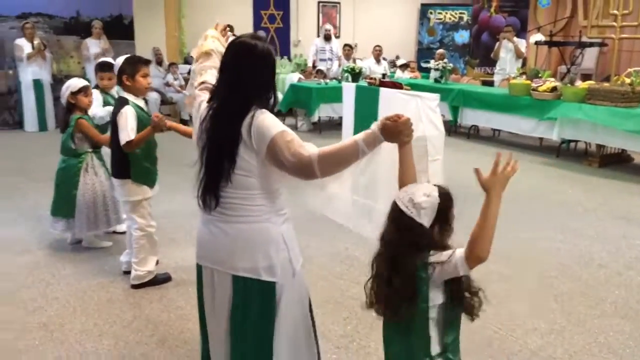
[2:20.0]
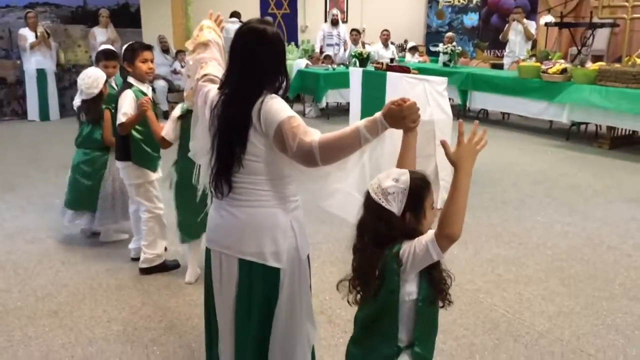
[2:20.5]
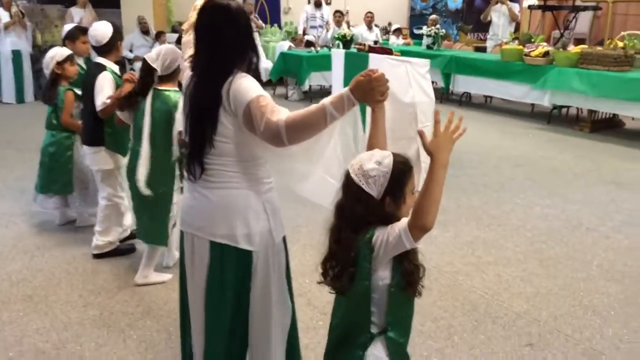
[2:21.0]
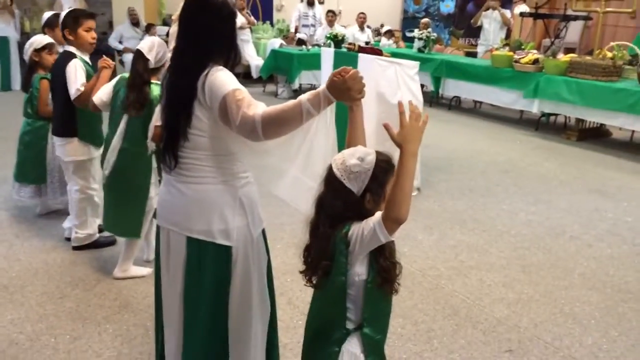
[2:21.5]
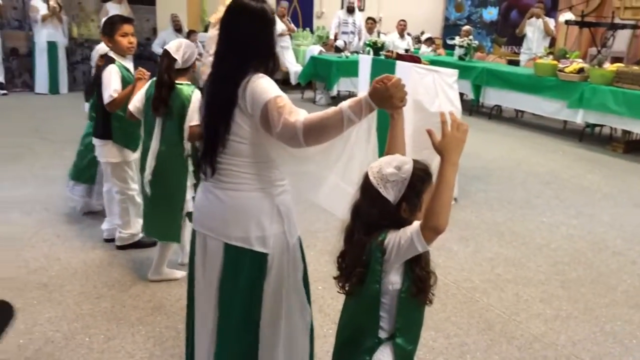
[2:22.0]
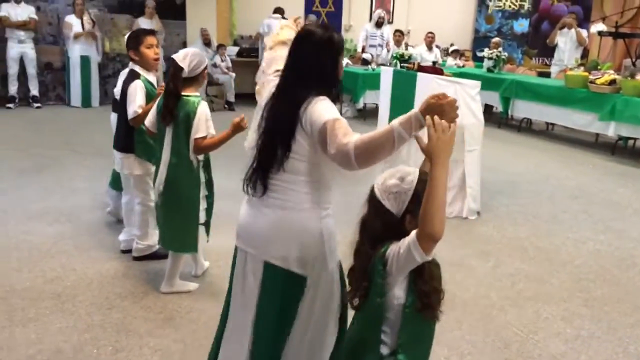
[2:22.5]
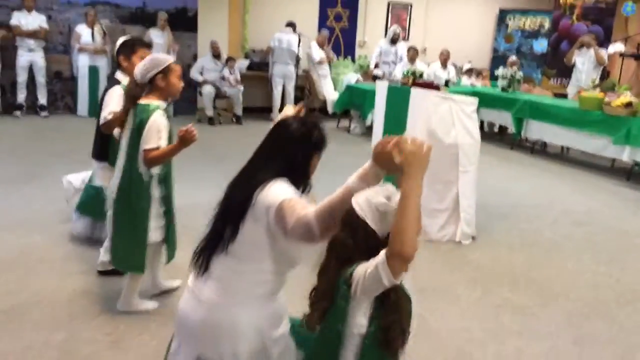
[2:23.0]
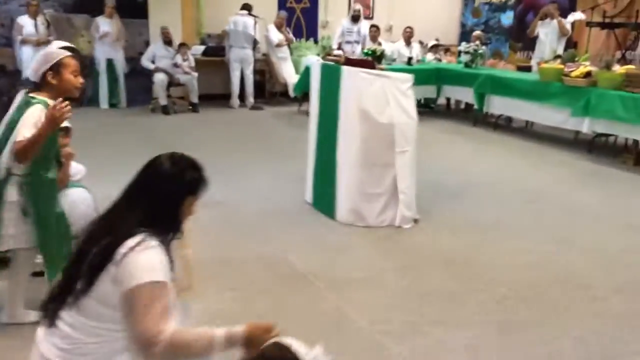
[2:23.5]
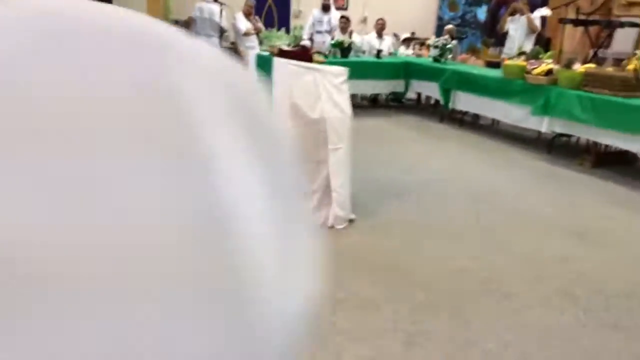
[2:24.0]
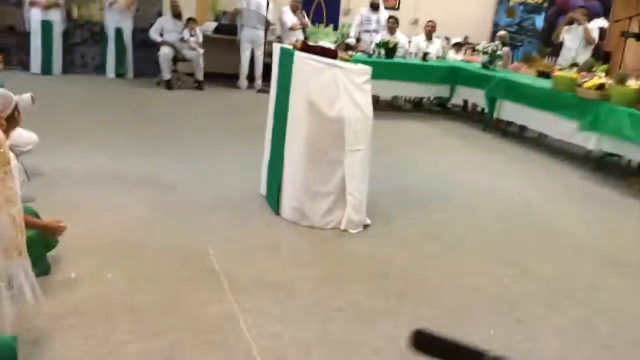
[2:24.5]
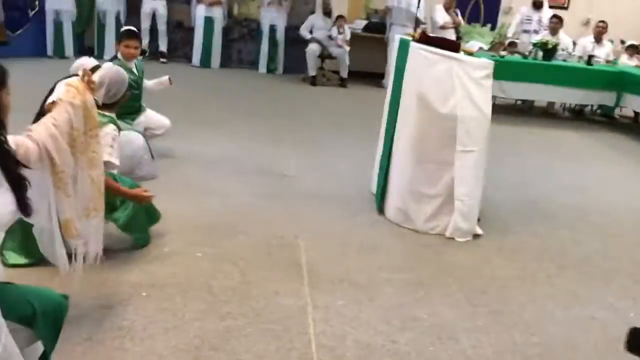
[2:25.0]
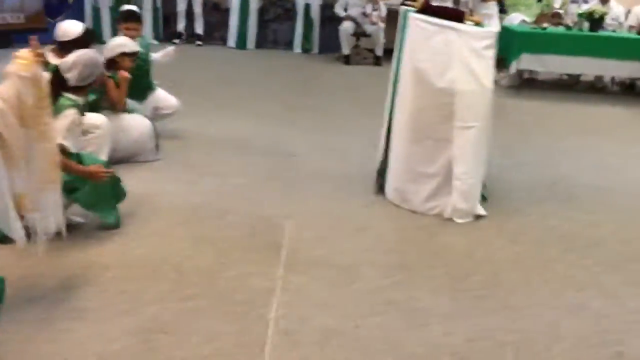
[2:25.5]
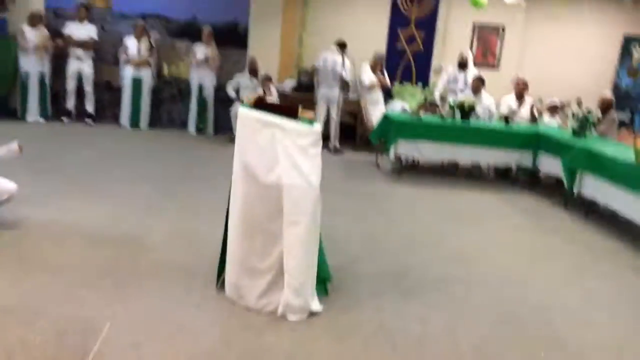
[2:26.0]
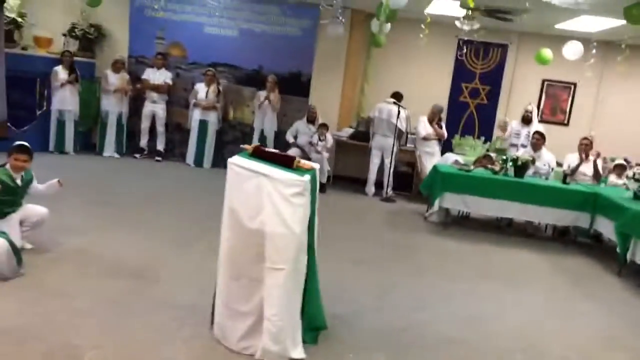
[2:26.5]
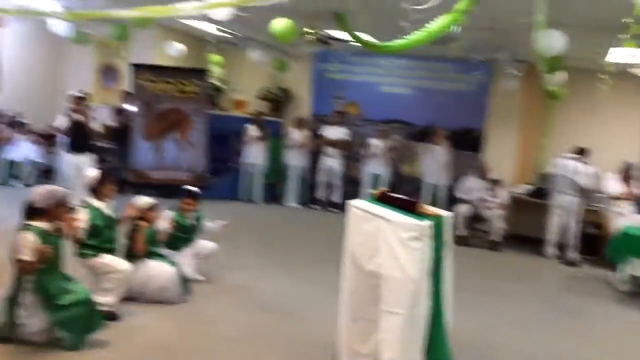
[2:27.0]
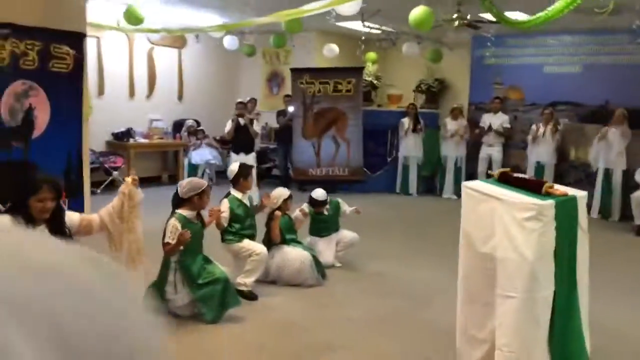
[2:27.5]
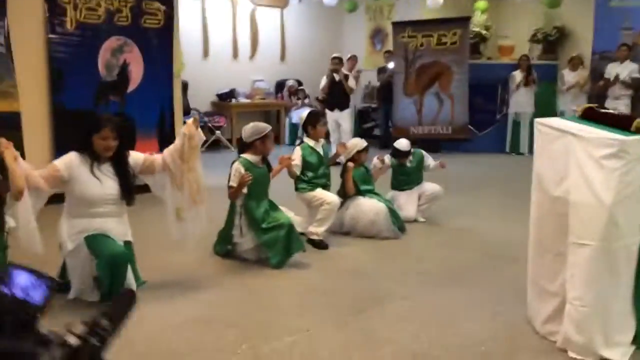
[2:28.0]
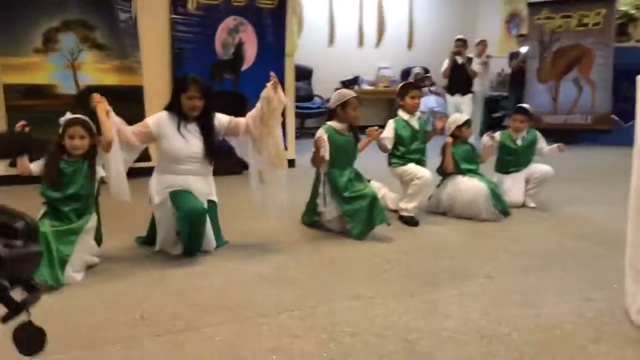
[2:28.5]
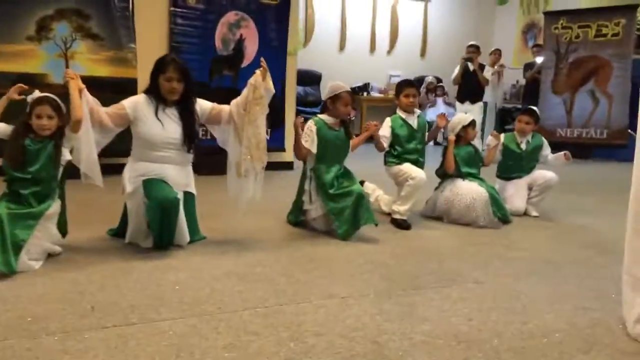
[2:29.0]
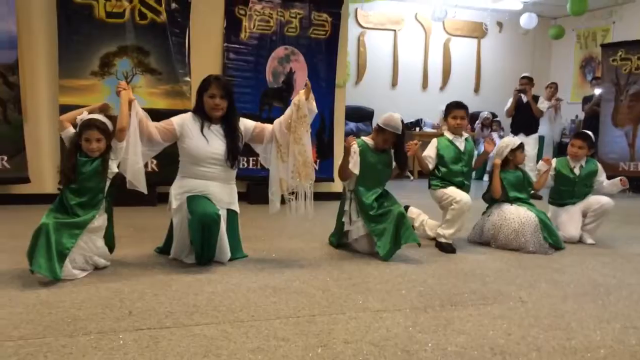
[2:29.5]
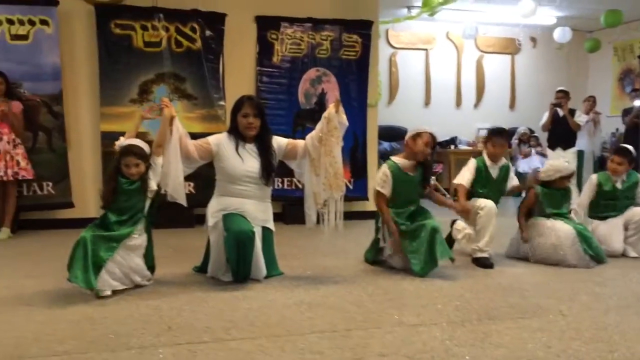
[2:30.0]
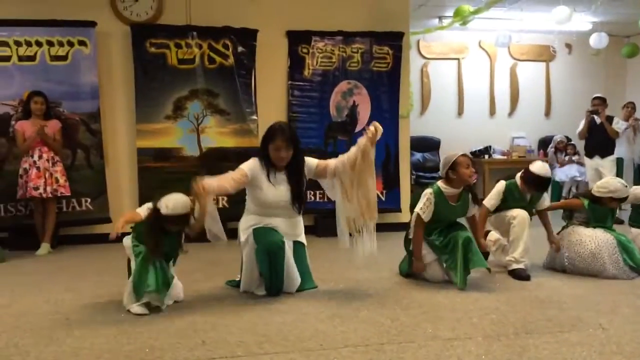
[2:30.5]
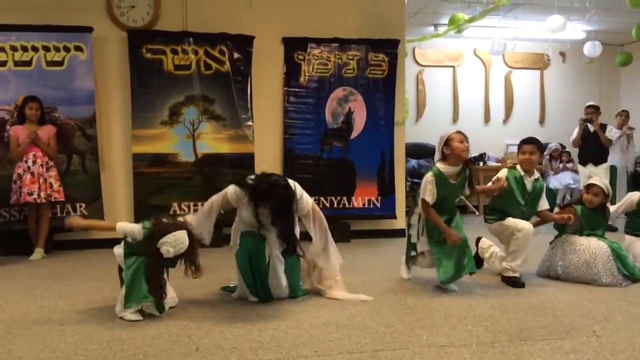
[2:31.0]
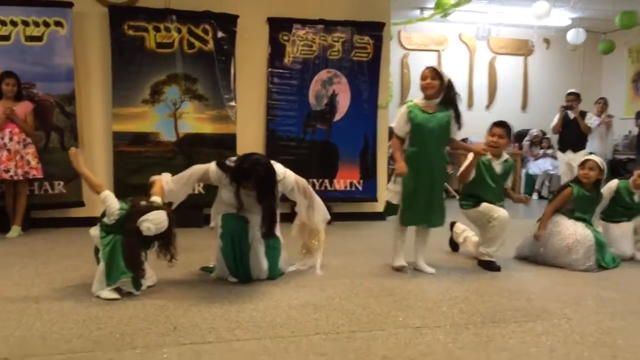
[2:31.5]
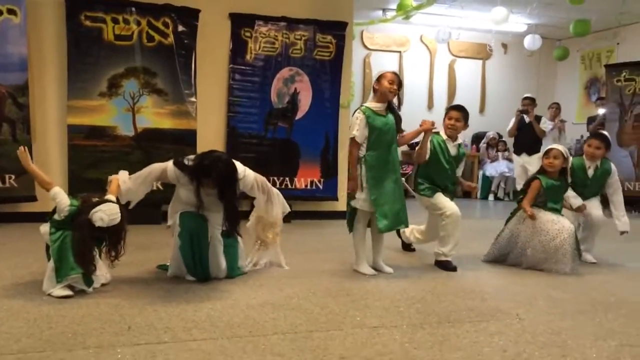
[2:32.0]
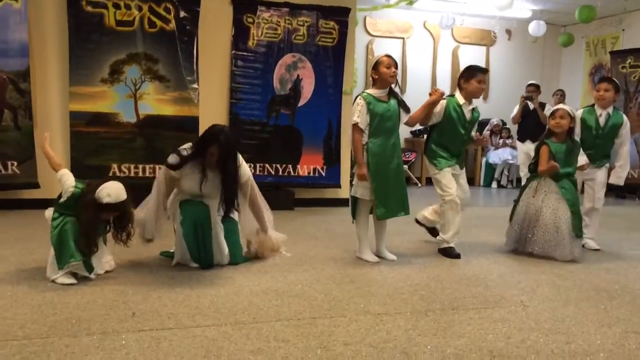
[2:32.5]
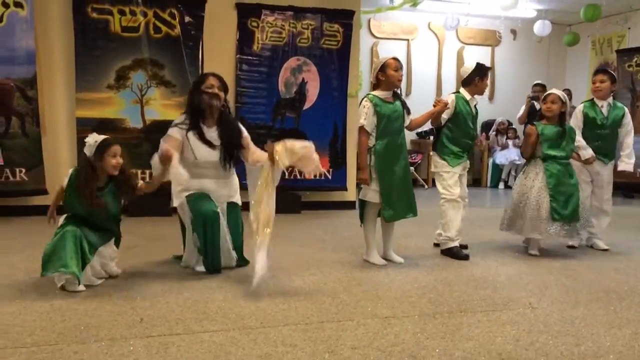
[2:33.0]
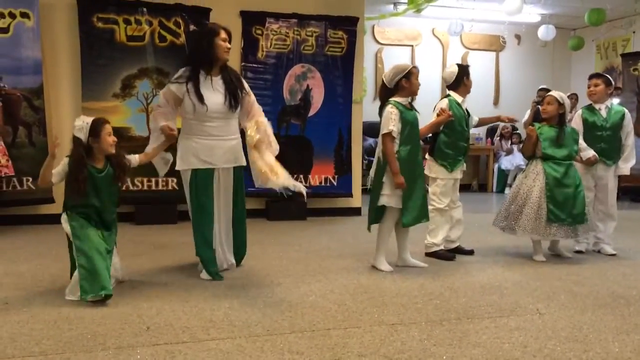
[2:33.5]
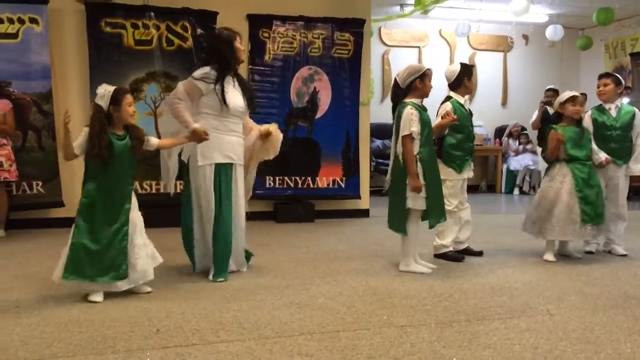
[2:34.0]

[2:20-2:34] All the children and the woman performing with them are shown; she seems to be performing so they can look at her if they forget what comes next. The dance appears to be finished: the children line up more and take a bow or curtsy, going down on one knee, bowing their heads, and then standing up.